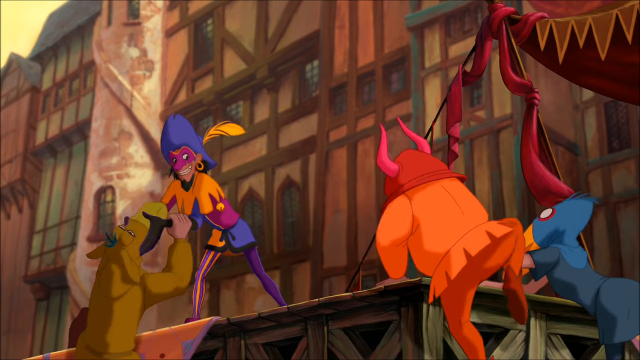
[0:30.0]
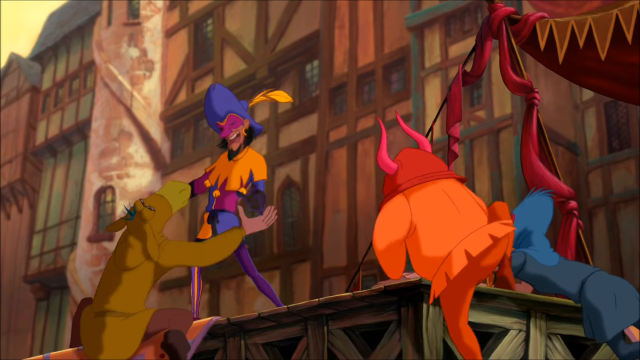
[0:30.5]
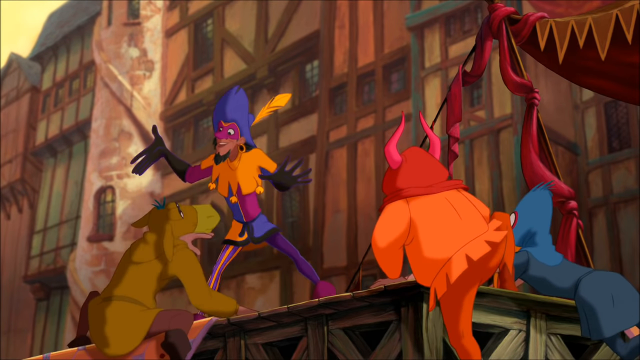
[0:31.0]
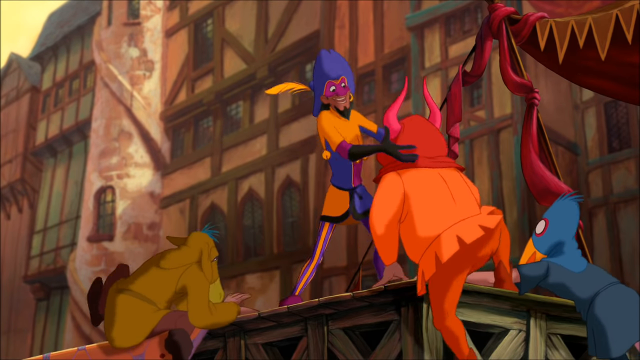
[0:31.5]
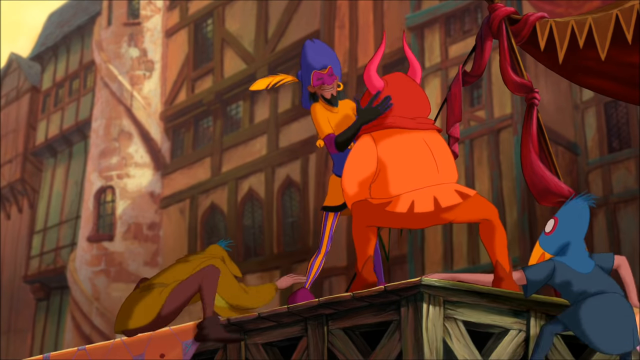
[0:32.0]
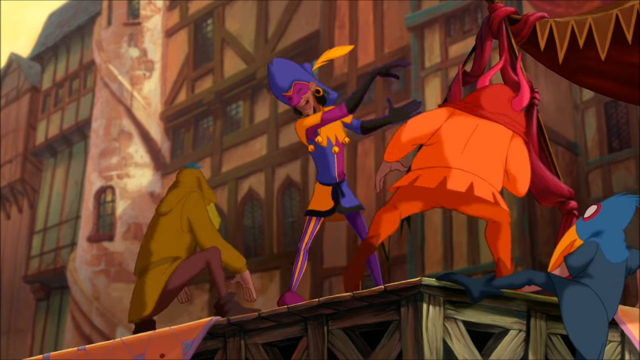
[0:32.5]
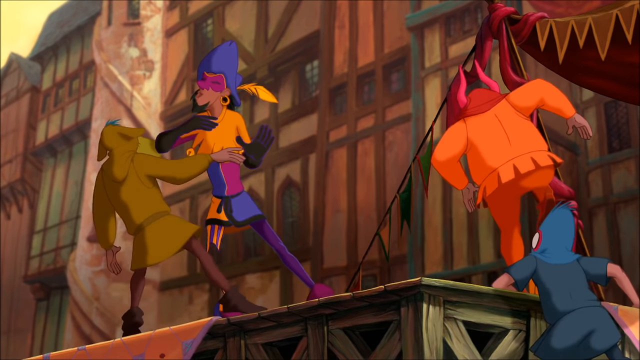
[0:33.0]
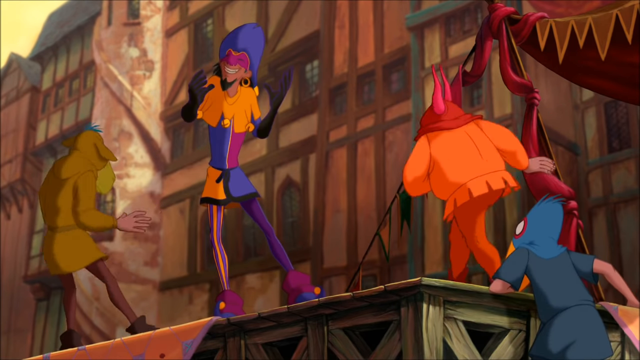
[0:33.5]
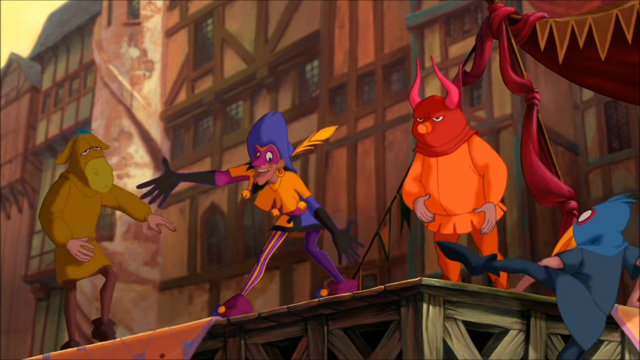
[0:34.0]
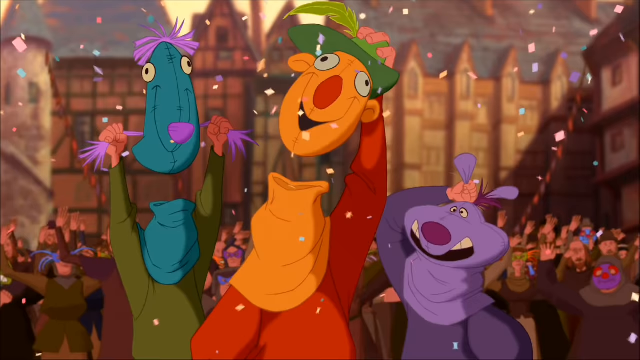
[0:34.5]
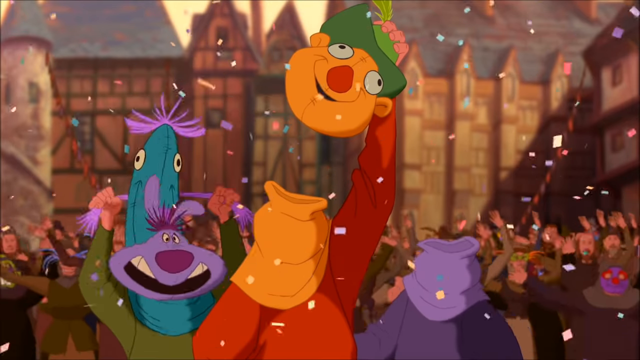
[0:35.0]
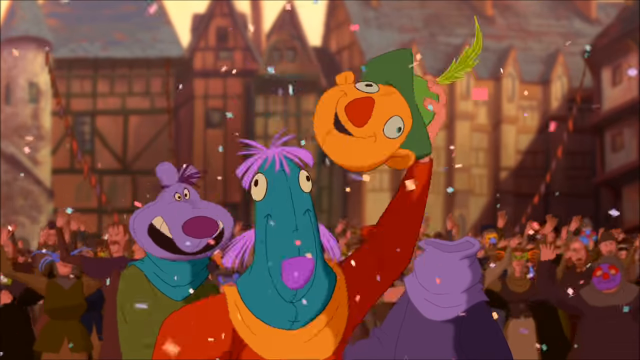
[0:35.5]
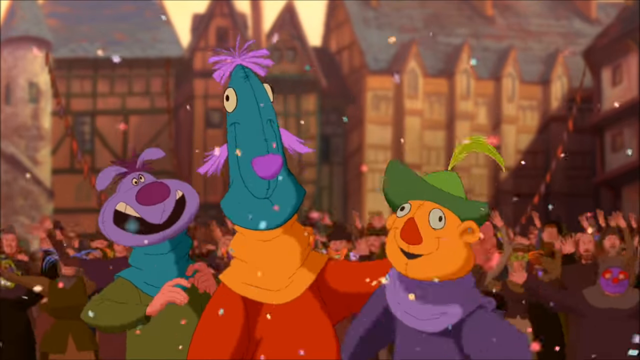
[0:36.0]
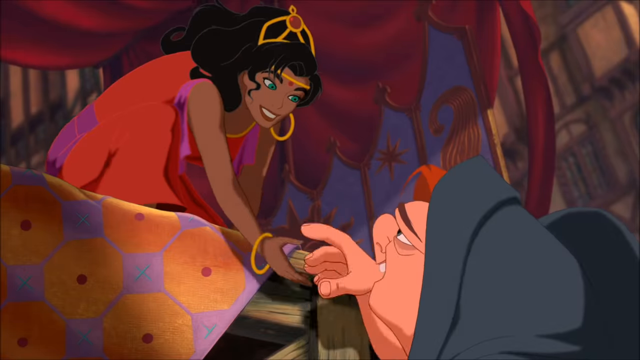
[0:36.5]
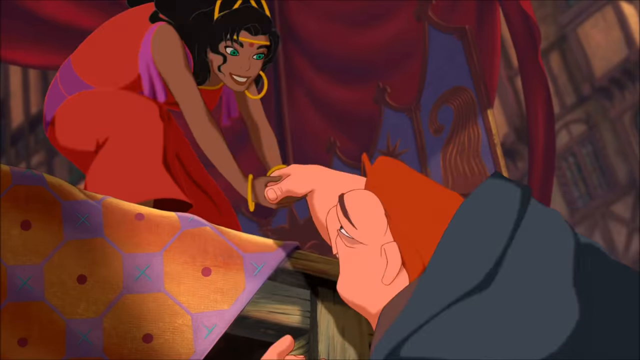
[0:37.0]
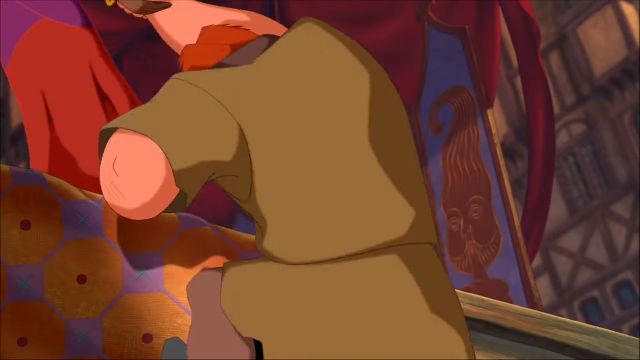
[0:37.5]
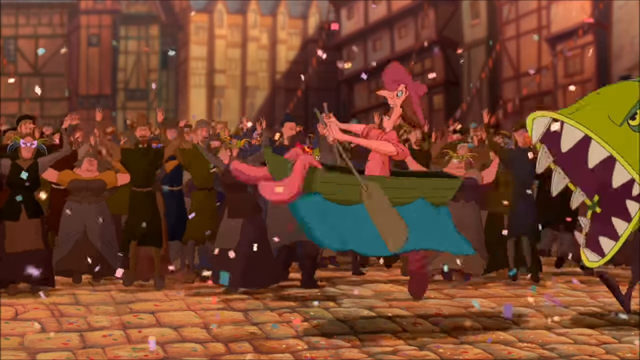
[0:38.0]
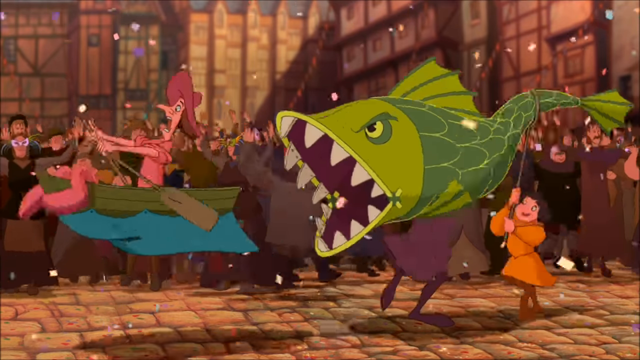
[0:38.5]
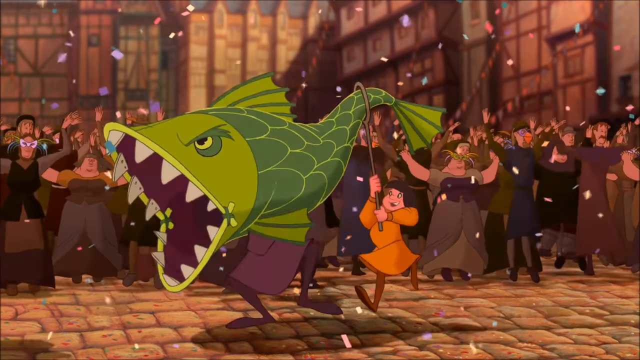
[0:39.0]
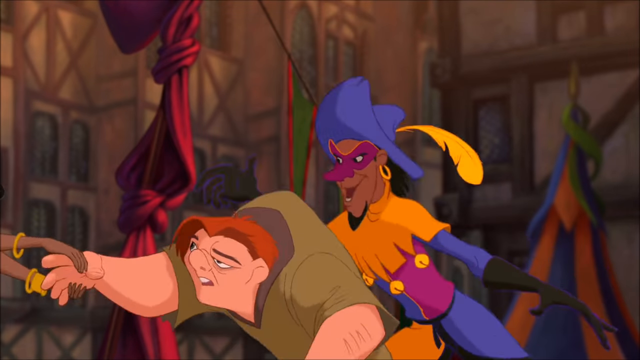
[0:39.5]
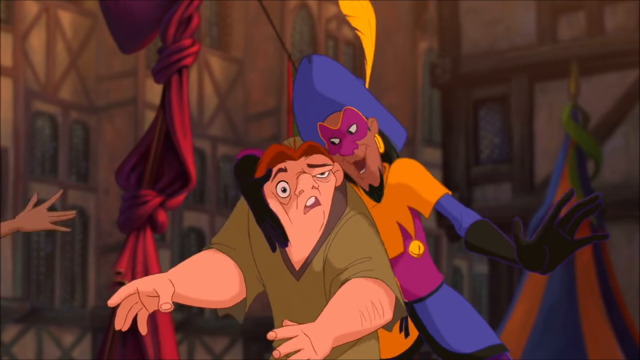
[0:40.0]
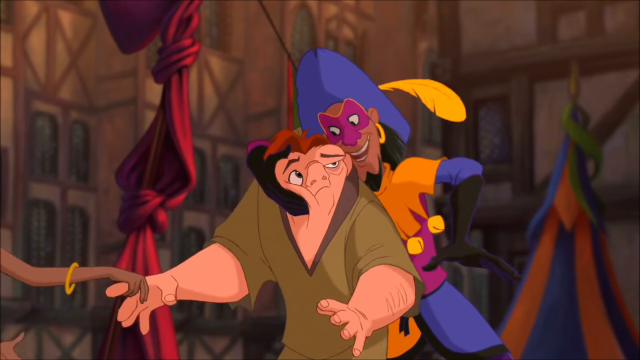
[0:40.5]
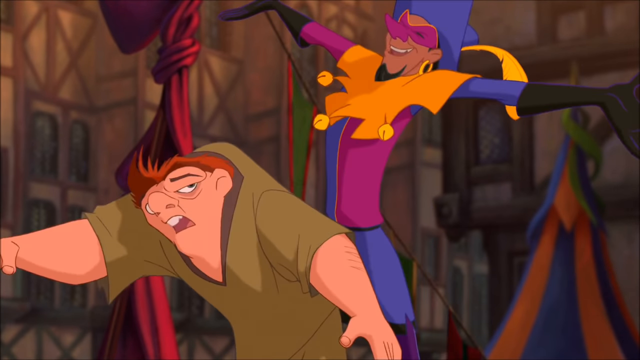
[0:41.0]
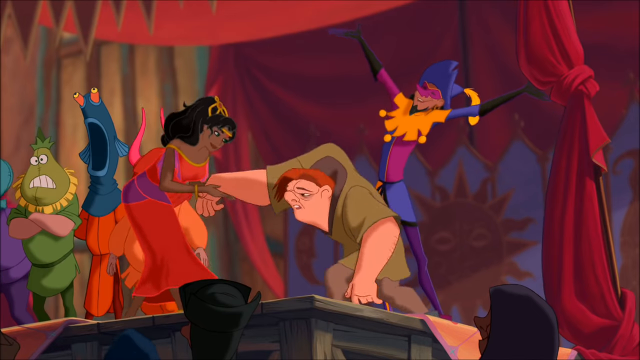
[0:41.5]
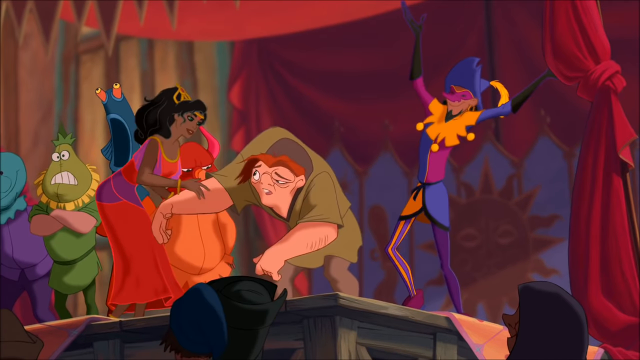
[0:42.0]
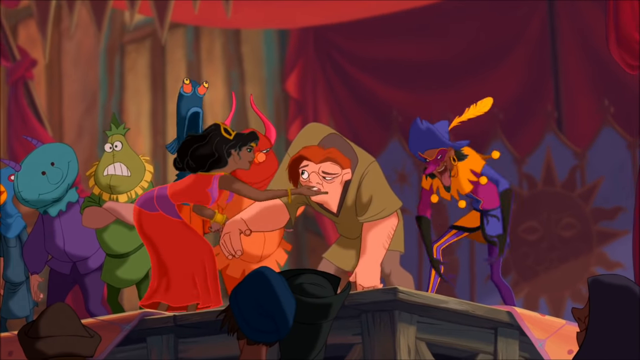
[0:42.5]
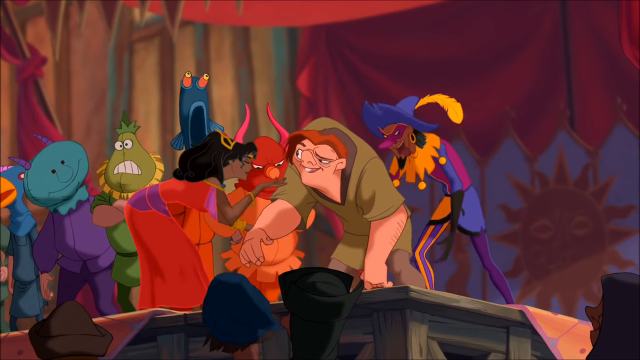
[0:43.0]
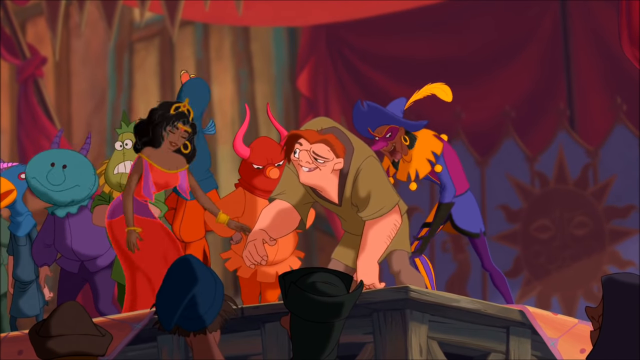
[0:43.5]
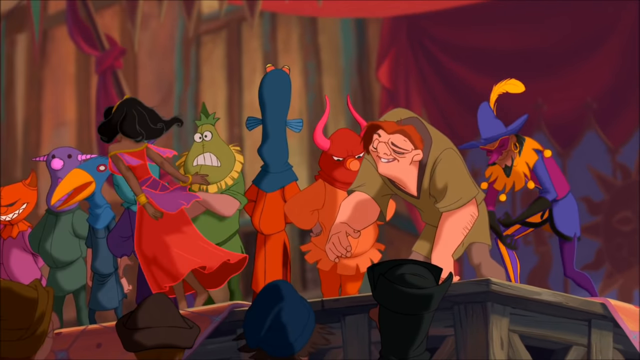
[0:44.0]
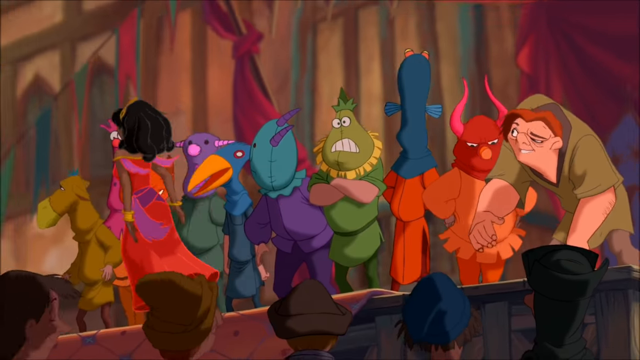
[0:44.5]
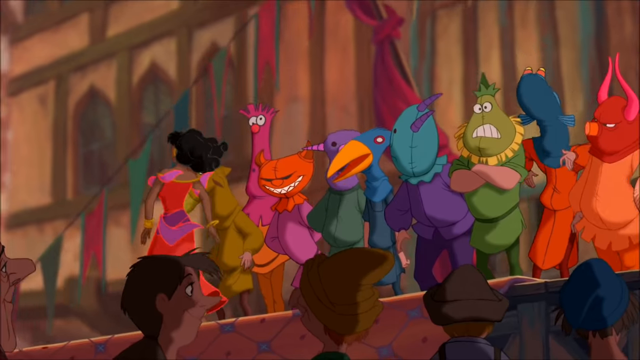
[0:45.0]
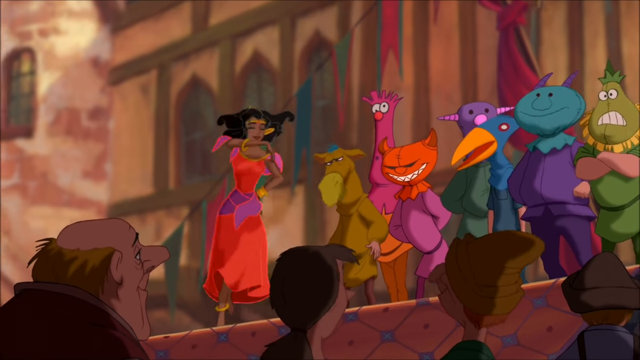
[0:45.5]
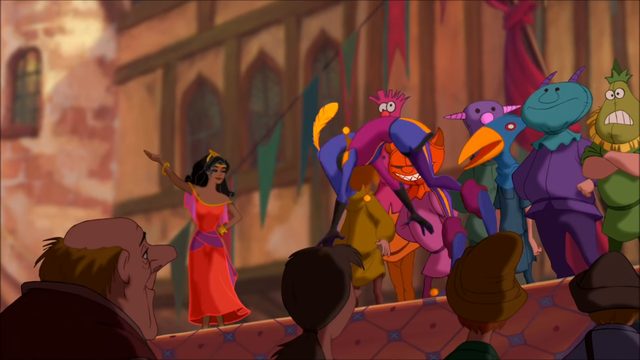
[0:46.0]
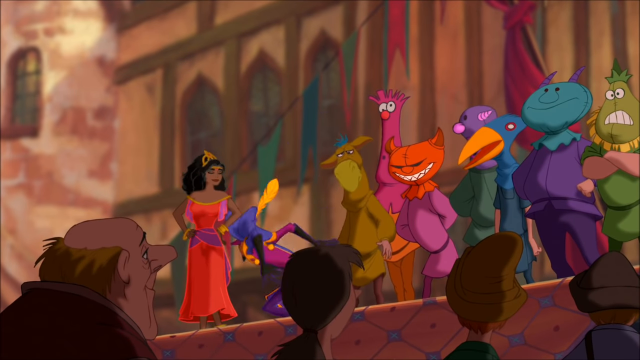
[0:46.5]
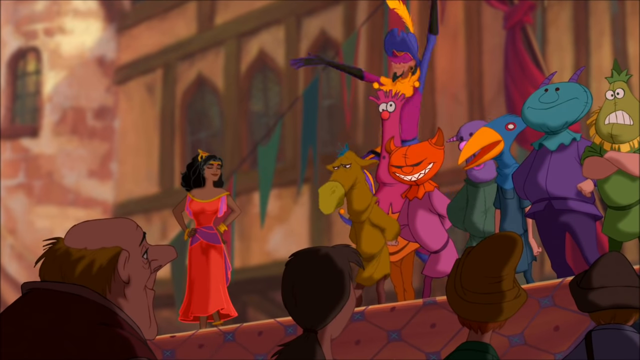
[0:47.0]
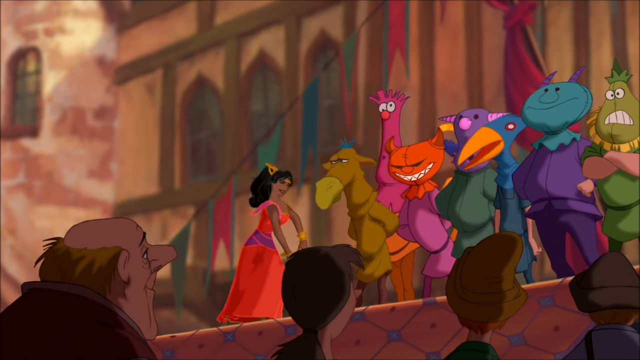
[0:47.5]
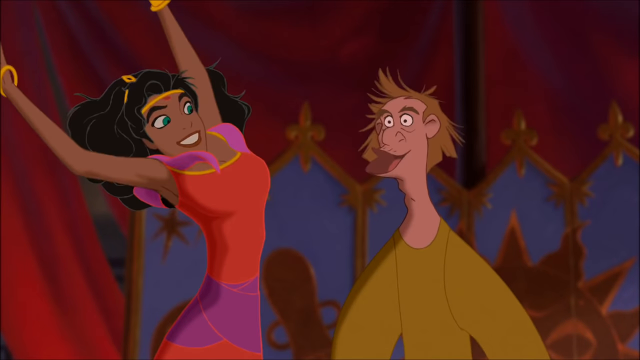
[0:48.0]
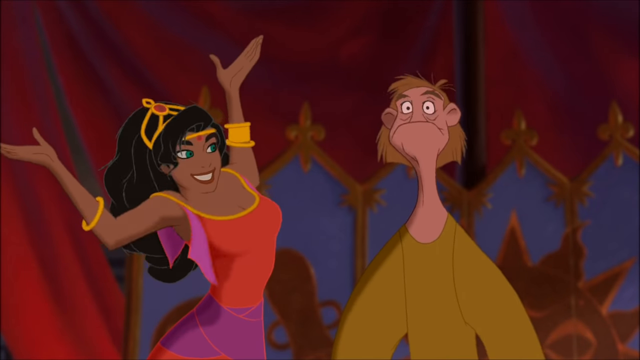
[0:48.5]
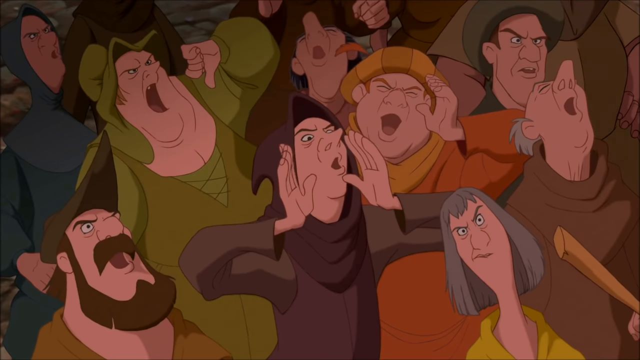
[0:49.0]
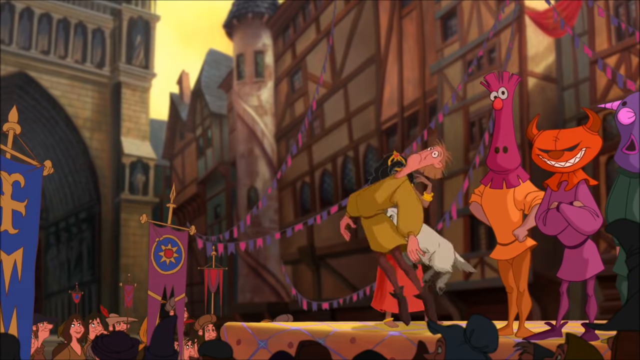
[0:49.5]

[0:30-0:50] The camera pulls back to show the jester on the stage, his black-gloved hands pointing out in both directions. He wears a yellow shirt and a purple cap with a yellow feather in it, and has a goatee beard. Other creatures dressed in different costumes crawl up onto the stage around him; he greets them, sometimes pushes them away a little, and gestures toward them. The woman helps him on the stage. The scene shifts to the crowd, where a large green fish goes by chomping in the air as if it is a shark chasing somebody. Back on stage, the jester hugs a pale hunchback man in a green shirt from behind, looking at him a little lasciviously, while the man has a very curious expression. The jester lets him go. The hunchback seems to be following the woman, or she him. The woman starts taking the headdresses off several of the characters. The jester steps back and seems to be both pushing away and celebrating the people in interesting costumes who have come onto the stage.